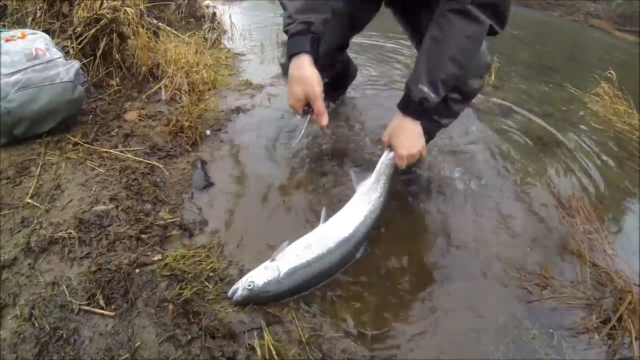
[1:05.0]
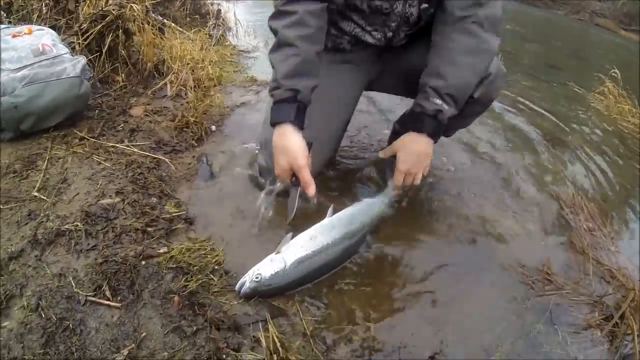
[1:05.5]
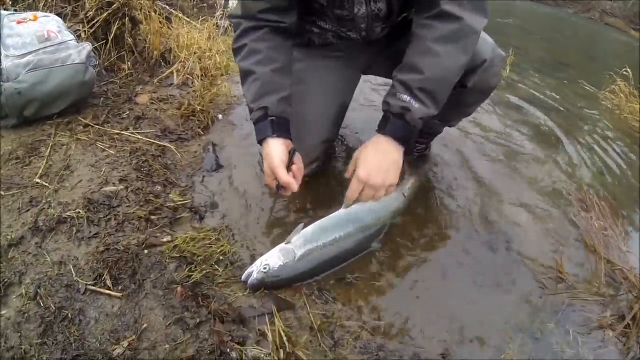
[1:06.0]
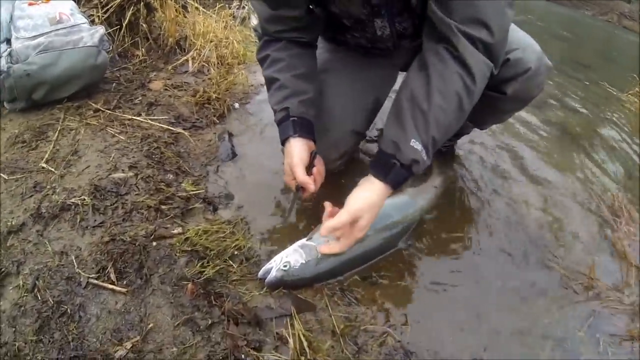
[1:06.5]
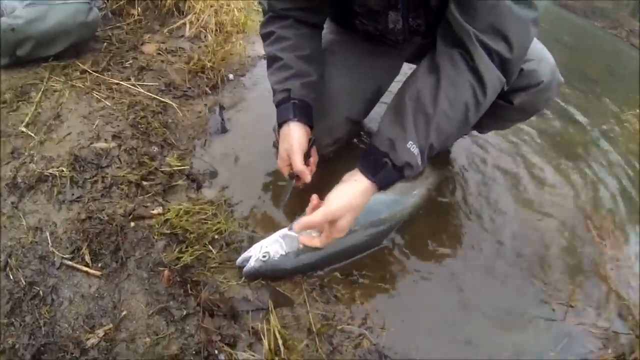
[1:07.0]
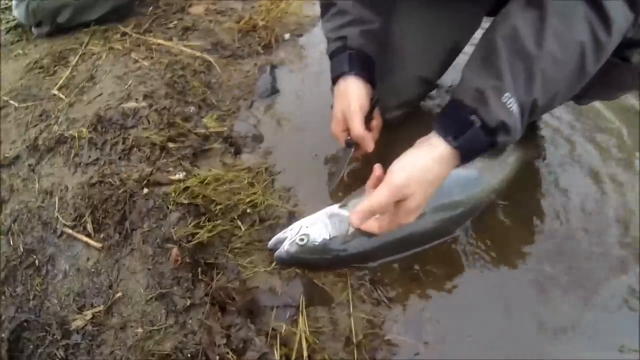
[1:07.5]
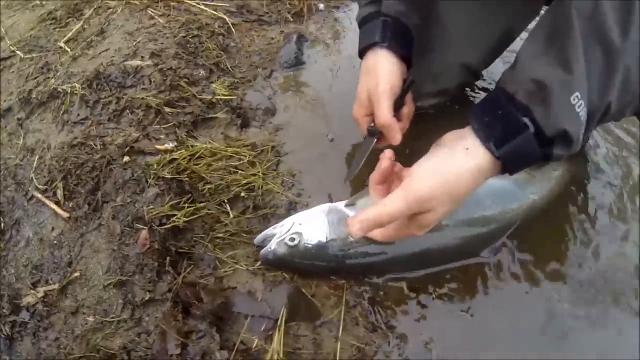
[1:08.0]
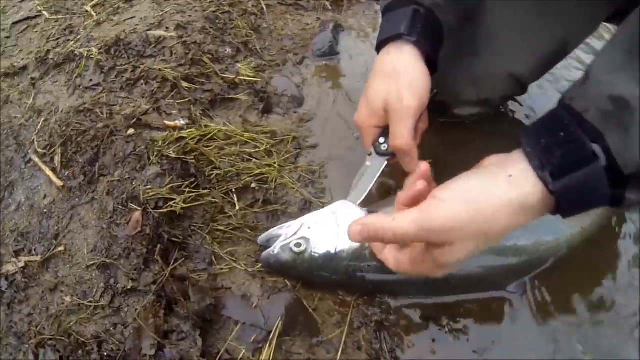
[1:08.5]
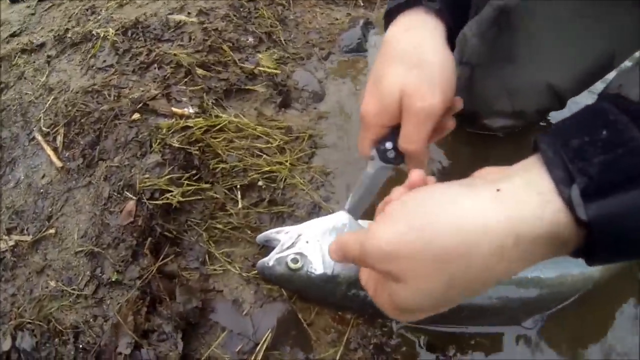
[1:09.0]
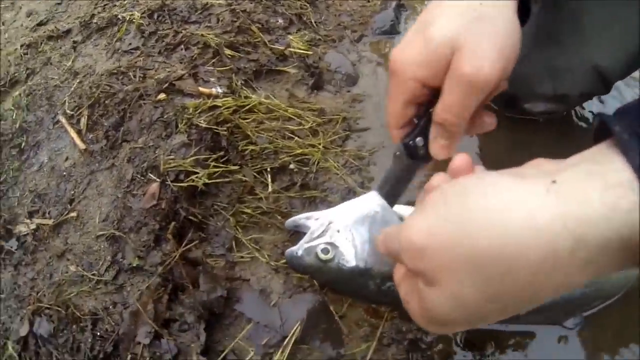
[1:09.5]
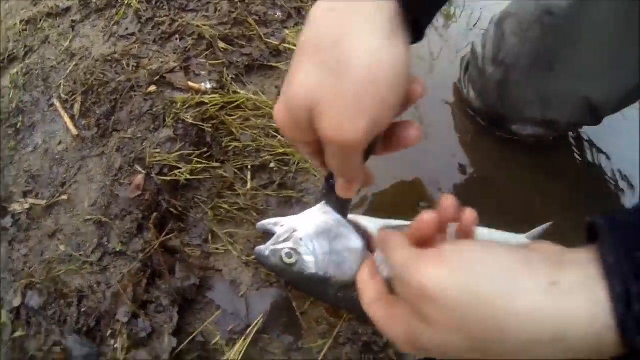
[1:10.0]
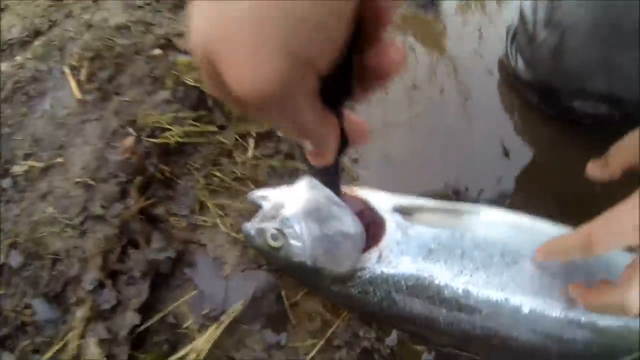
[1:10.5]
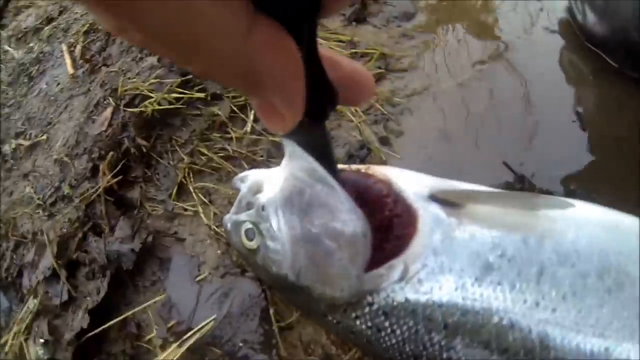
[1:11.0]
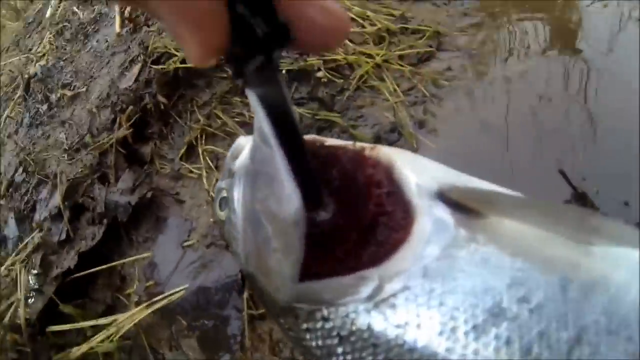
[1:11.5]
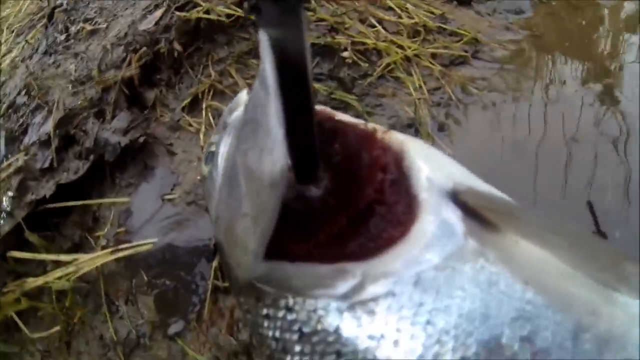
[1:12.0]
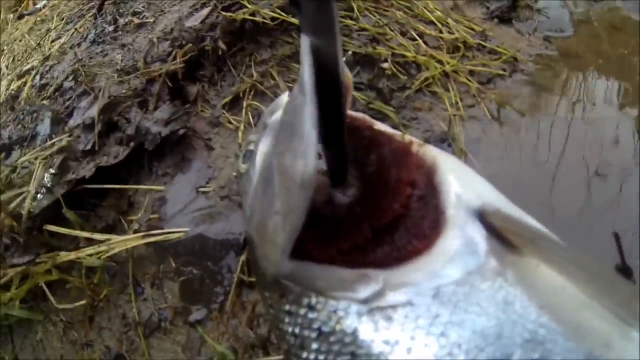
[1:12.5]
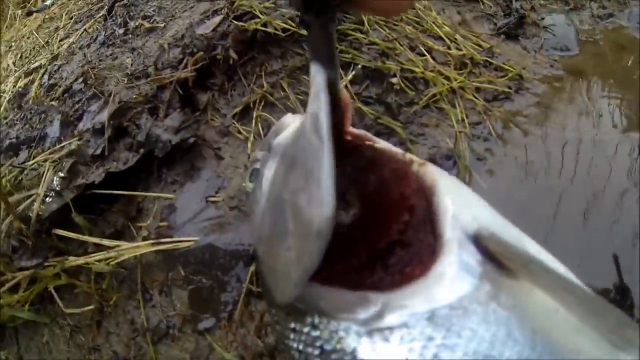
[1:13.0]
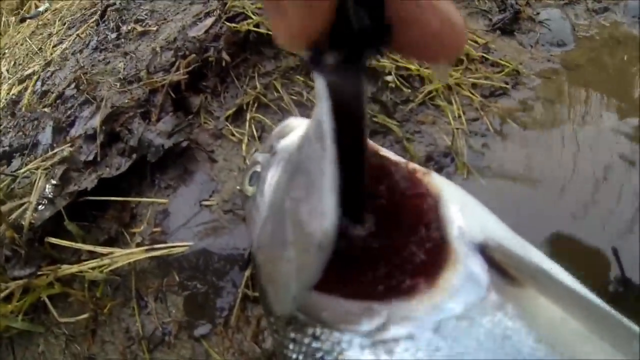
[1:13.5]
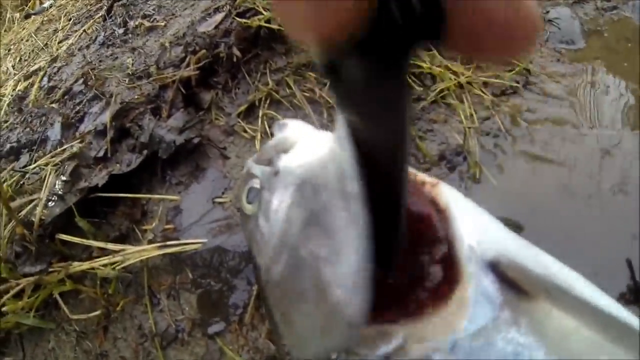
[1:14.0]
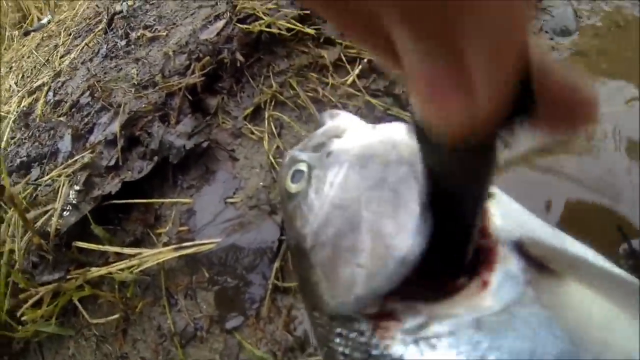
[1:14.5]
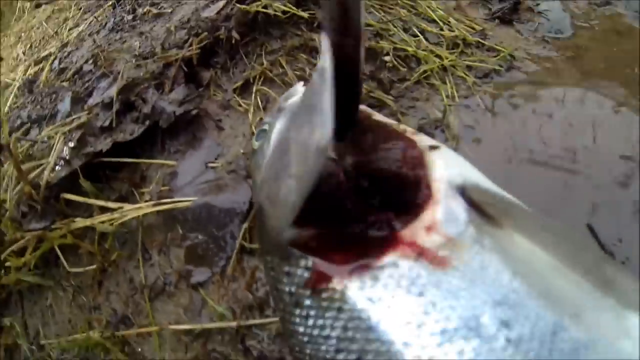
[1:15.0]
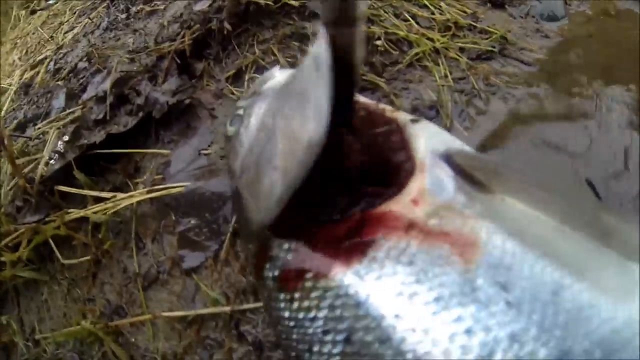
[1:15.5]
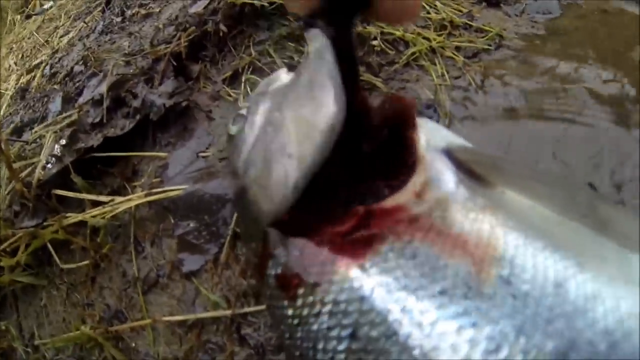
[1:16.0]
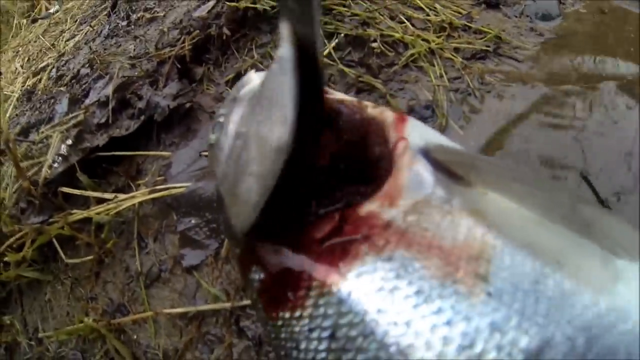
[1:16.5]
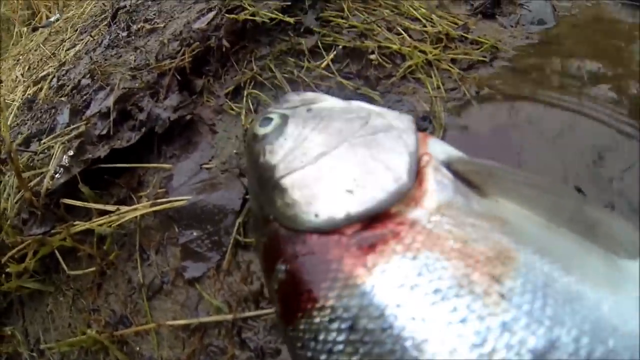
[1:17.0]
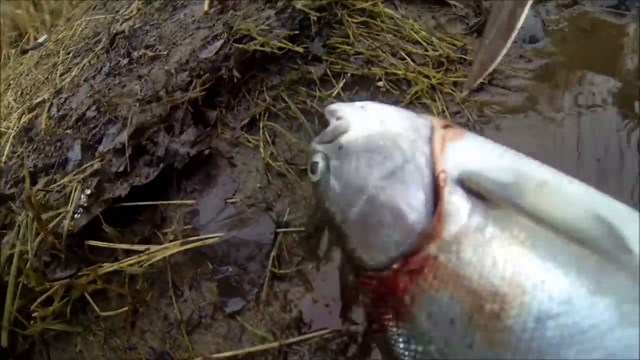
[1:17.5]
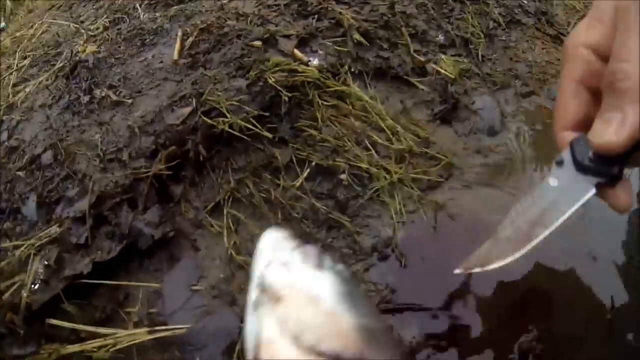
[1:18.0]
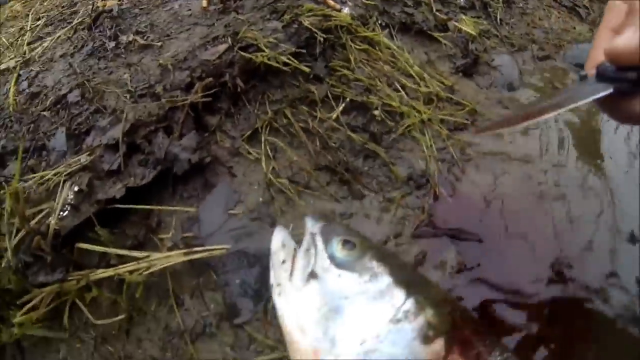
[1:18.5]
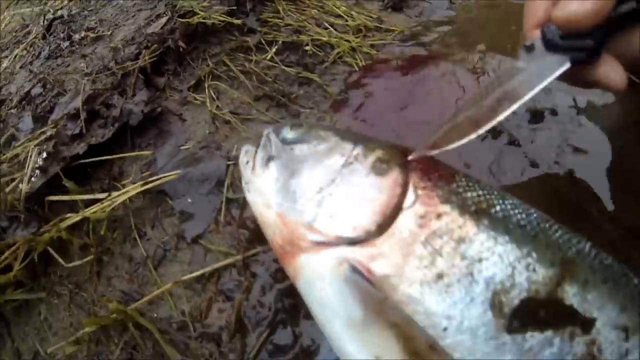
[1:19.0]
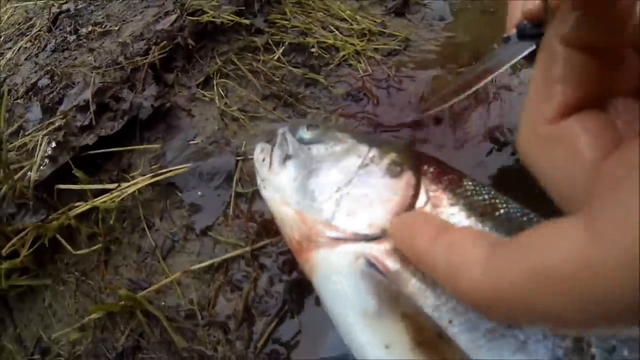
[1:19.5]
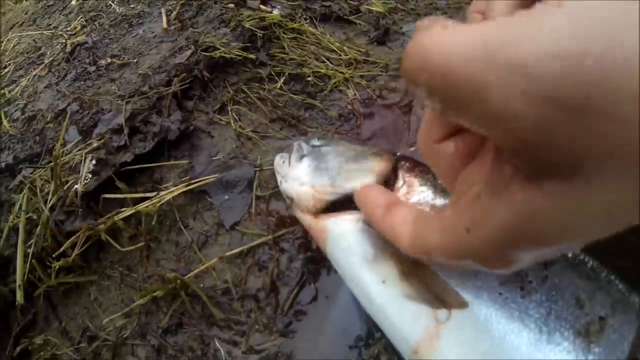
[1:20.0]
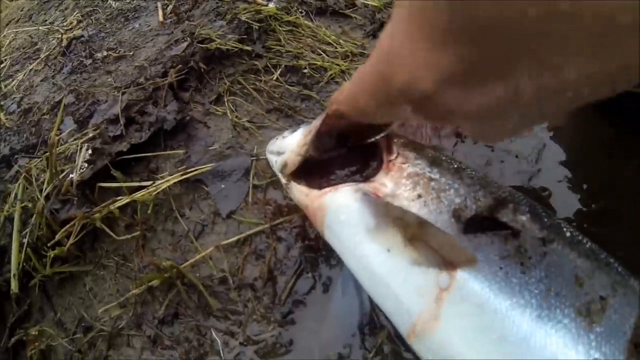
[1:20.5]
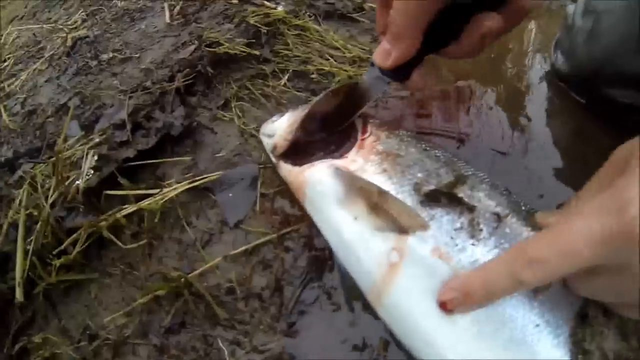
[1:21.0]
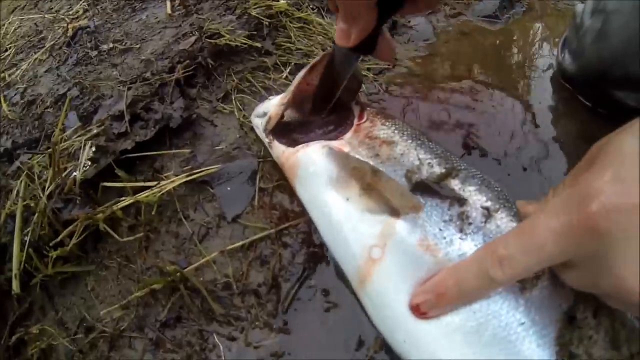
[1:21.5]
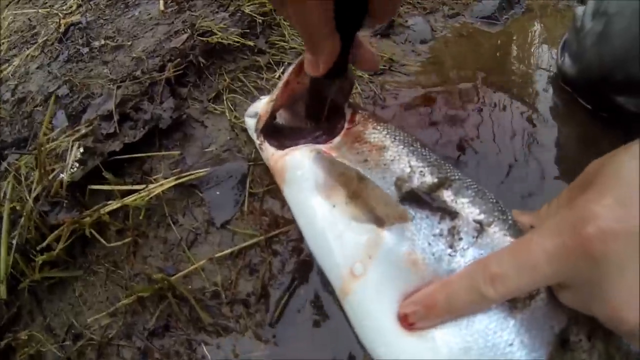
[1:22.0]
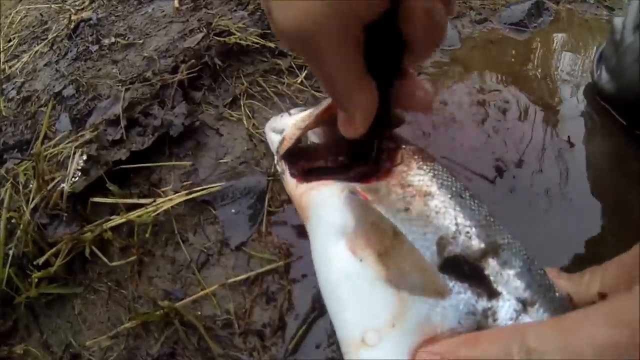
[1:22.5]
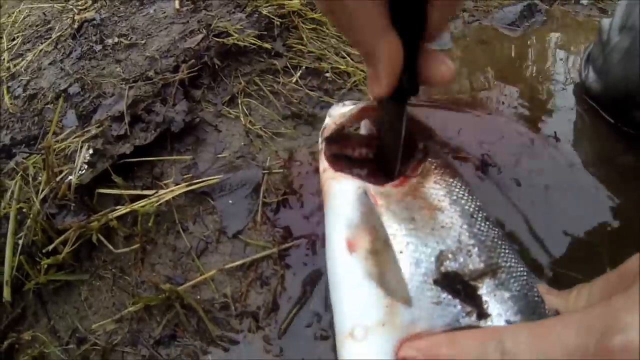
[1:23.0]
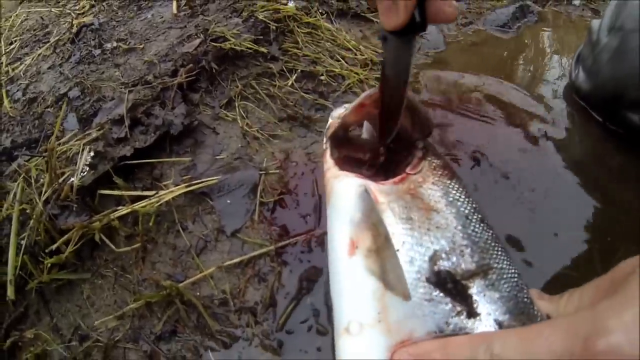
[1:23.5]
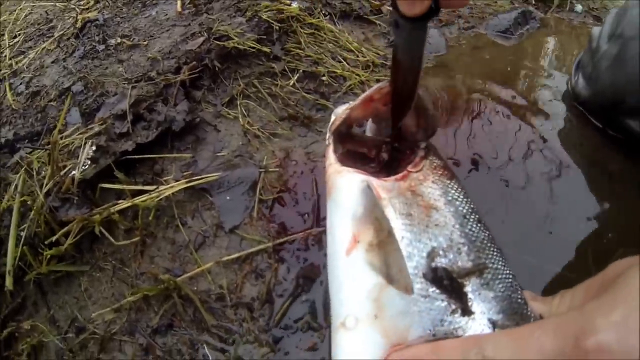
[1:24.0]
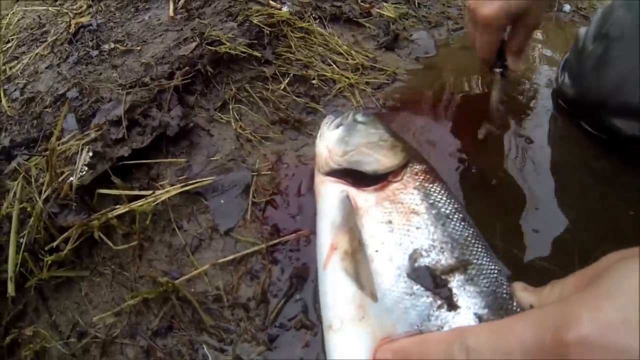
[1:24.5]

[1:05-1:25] The man prepares the fish, apparently for eating later. Using his fingers and the knife, he lifts a flap on the side of the fish near and underneath its eye, where the brain presumably is, and starts poking into that section, cutting around inside. As he does, pink liquid, possibly blood or pink water, rushes out; what he pokes into looks gelatinous. A close-up shows the fish's eye and mouth, with fins visible on either side. He pokes it several times on one side, then rolls the fish over and pokes the other side. The fish lies on the bank of the river with the pink liquid running into the river. He then washes his knife off in the river.